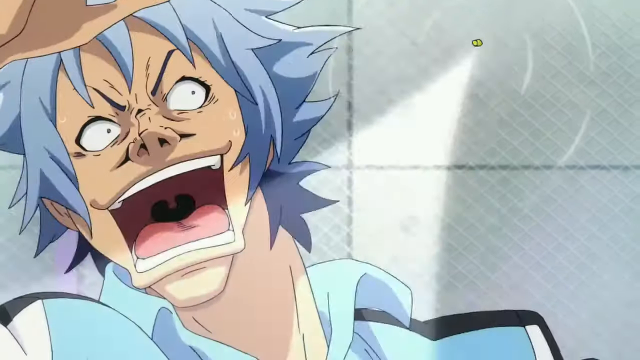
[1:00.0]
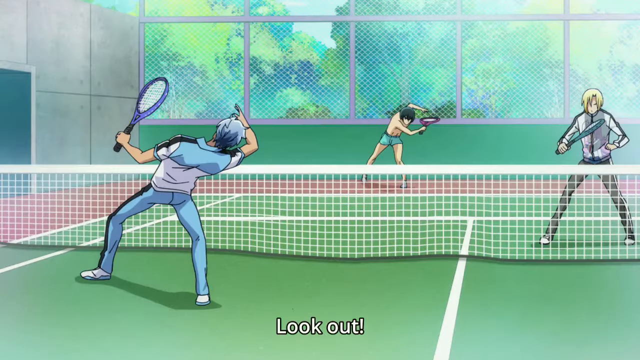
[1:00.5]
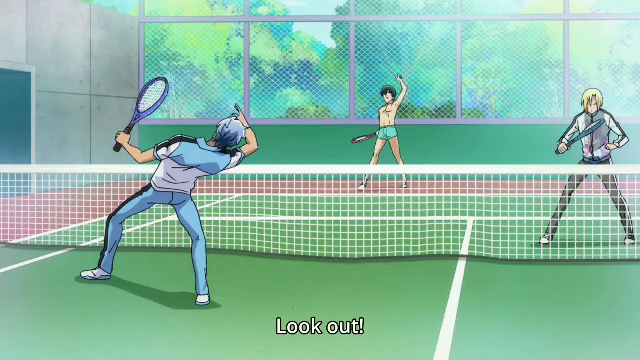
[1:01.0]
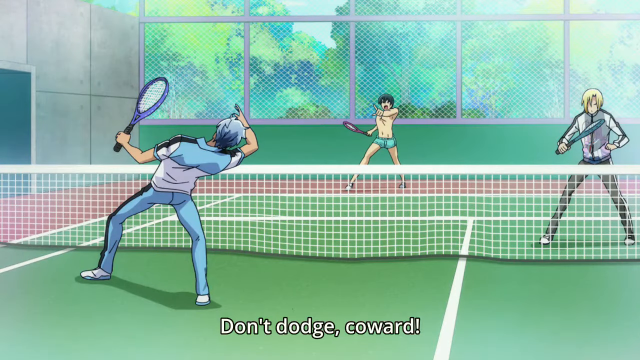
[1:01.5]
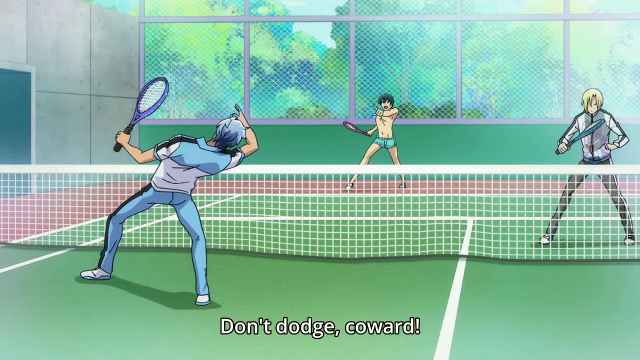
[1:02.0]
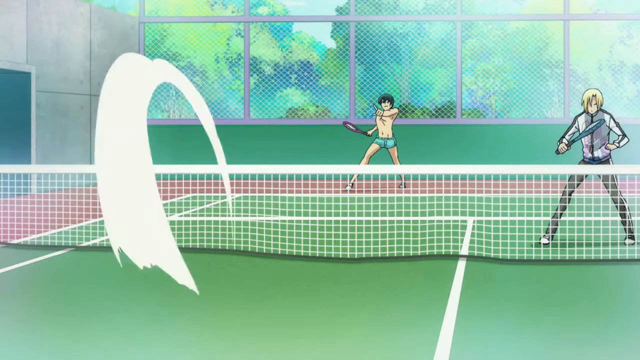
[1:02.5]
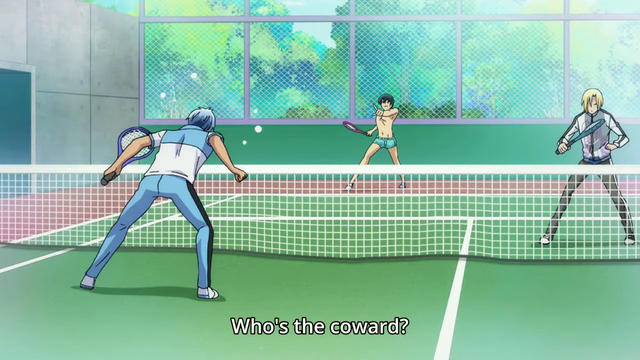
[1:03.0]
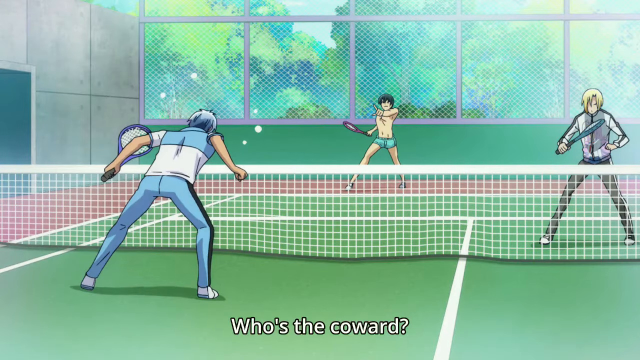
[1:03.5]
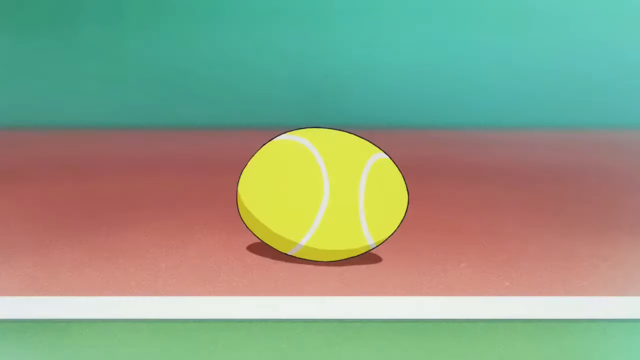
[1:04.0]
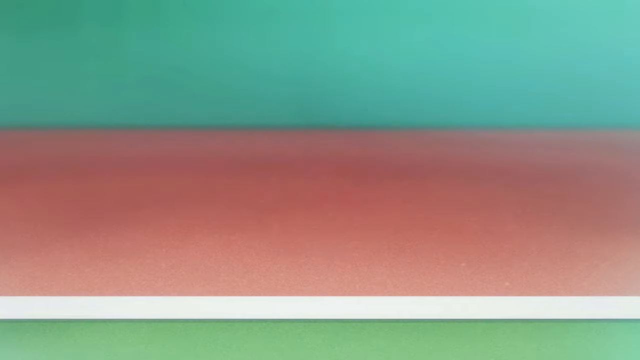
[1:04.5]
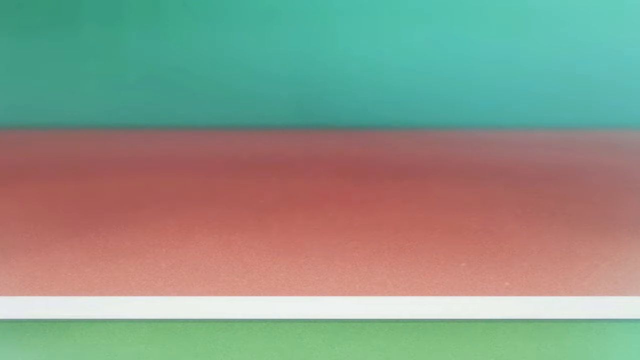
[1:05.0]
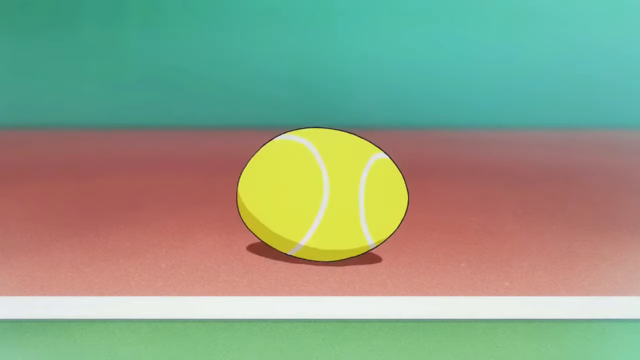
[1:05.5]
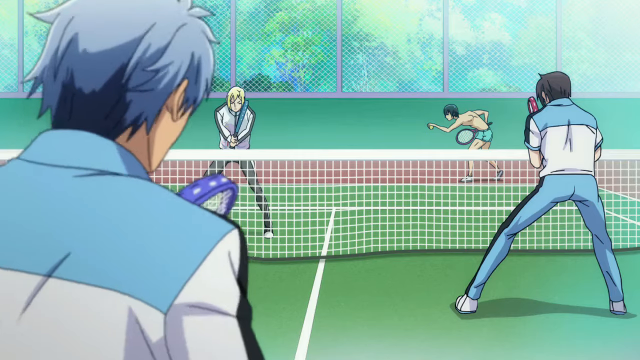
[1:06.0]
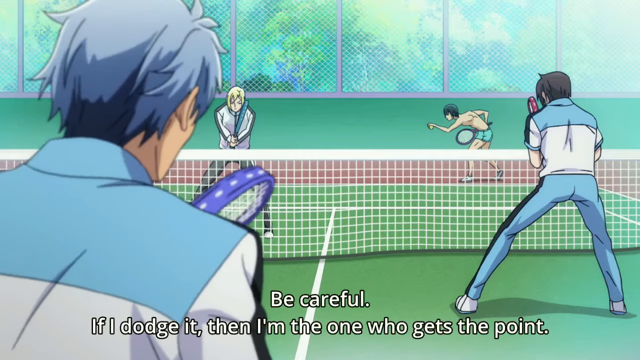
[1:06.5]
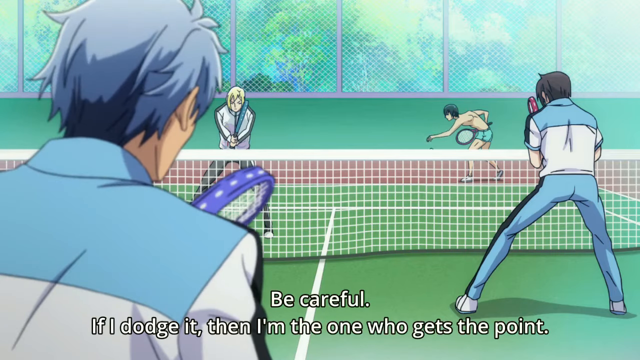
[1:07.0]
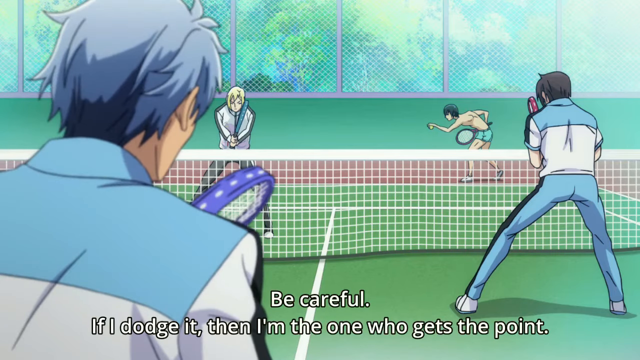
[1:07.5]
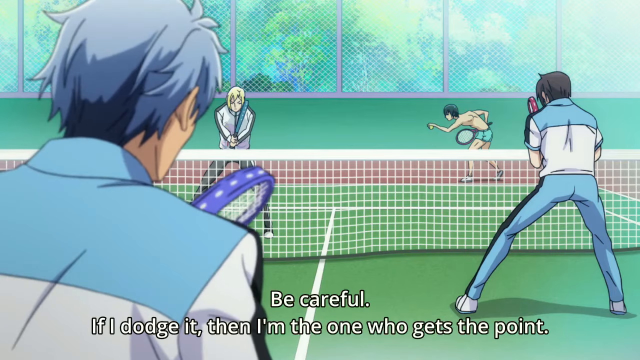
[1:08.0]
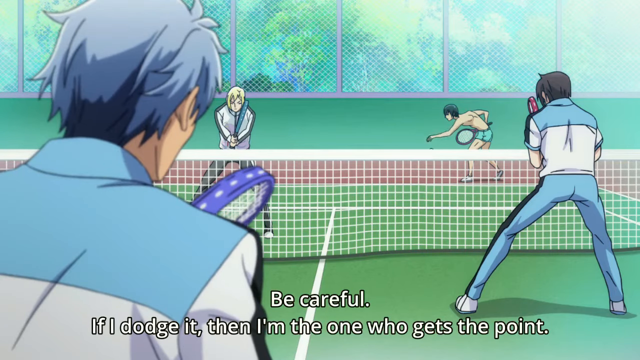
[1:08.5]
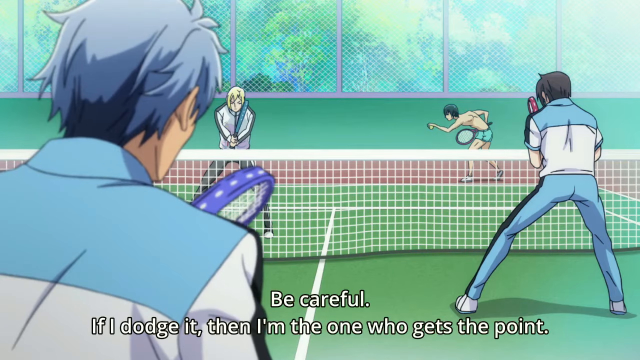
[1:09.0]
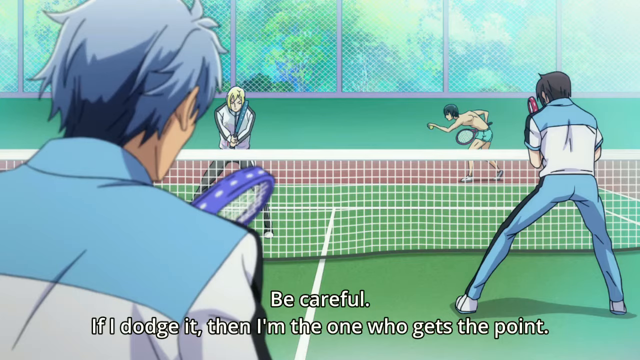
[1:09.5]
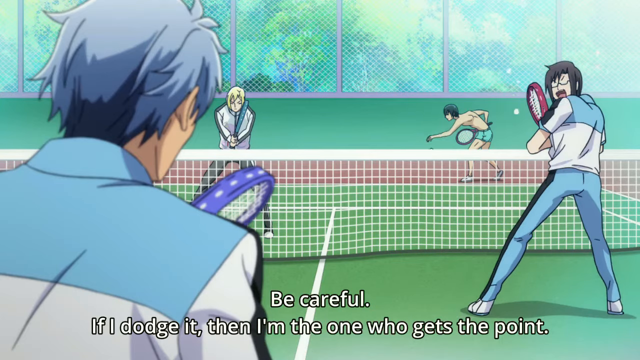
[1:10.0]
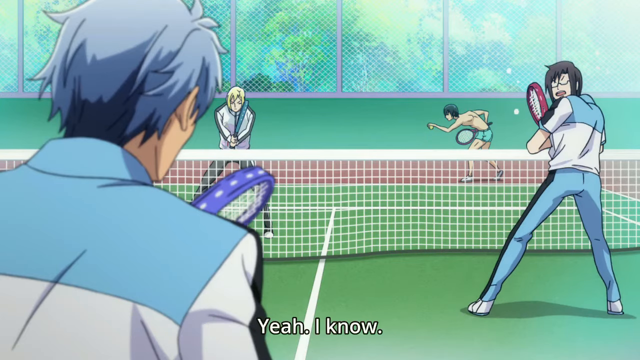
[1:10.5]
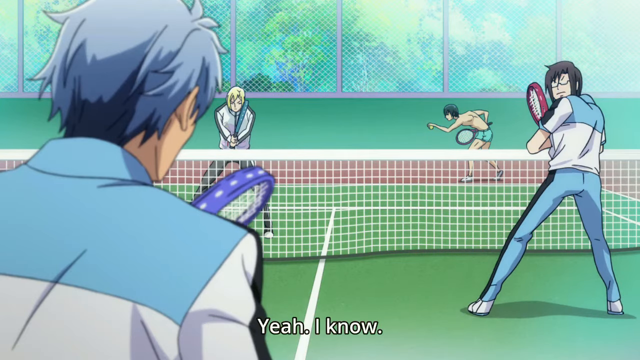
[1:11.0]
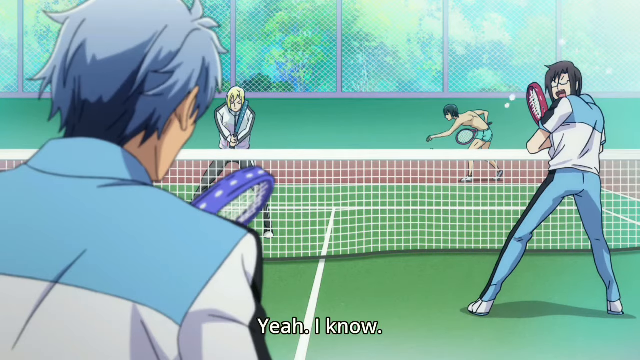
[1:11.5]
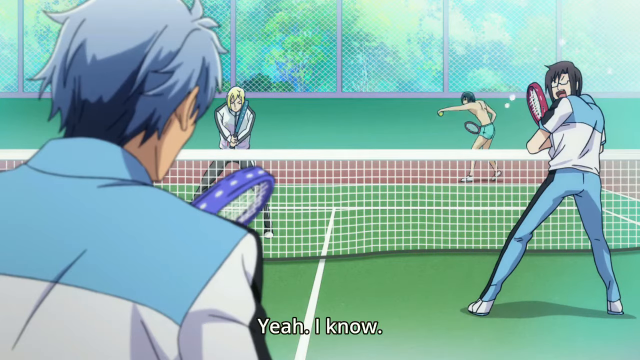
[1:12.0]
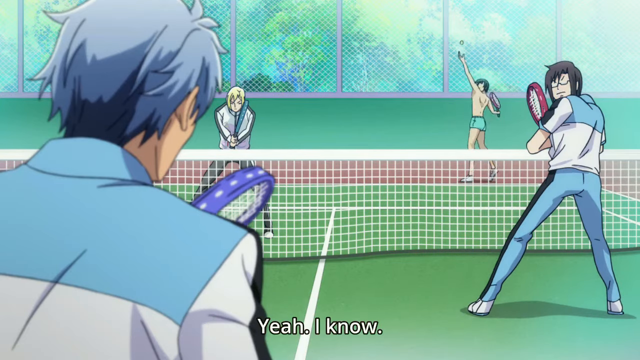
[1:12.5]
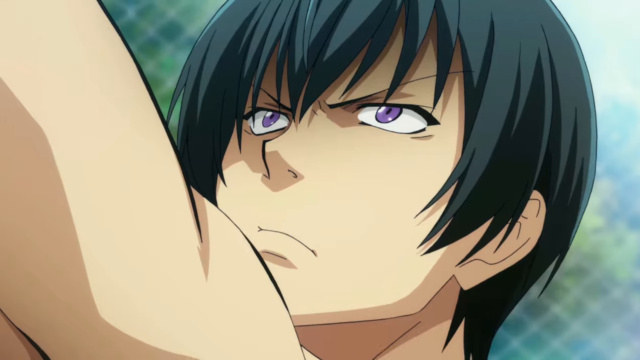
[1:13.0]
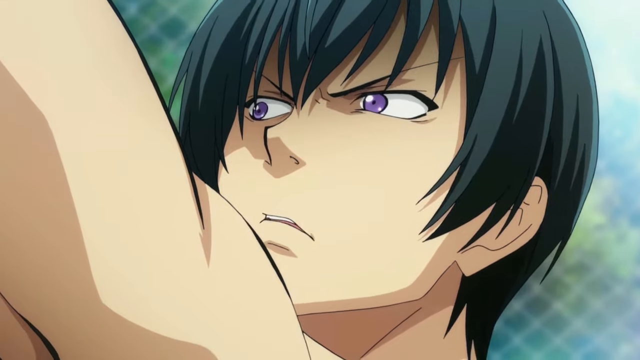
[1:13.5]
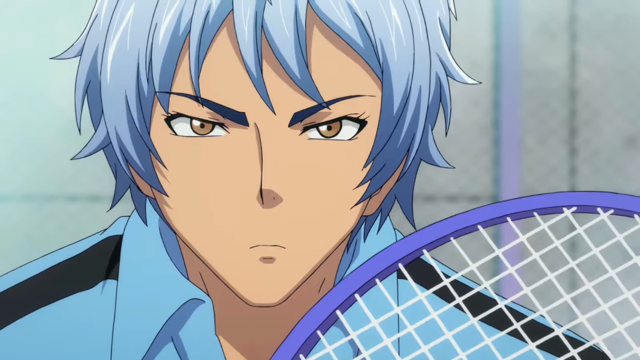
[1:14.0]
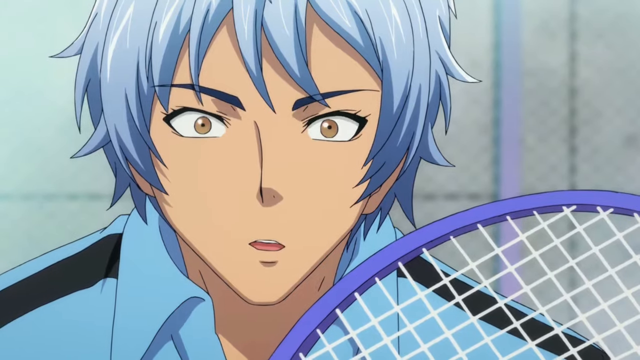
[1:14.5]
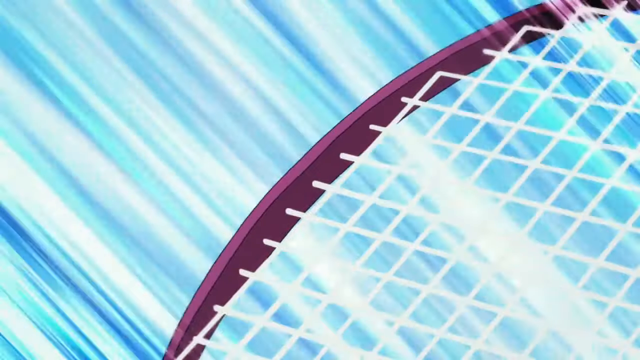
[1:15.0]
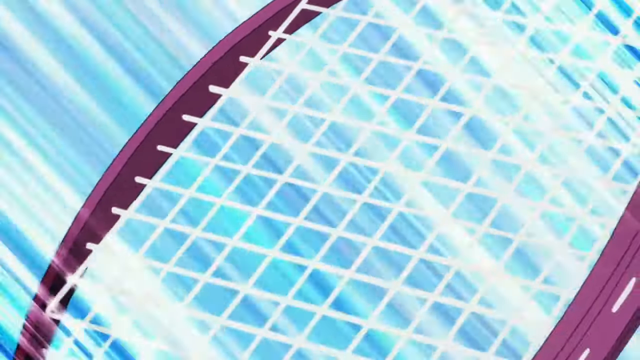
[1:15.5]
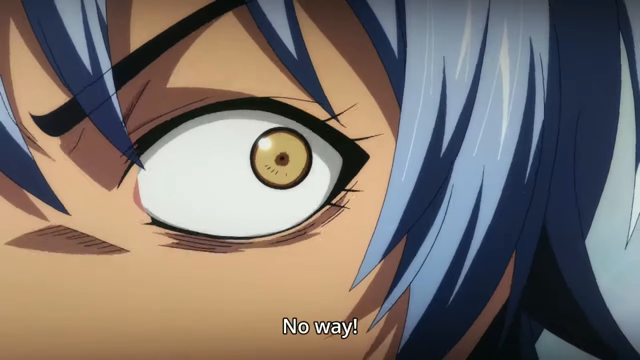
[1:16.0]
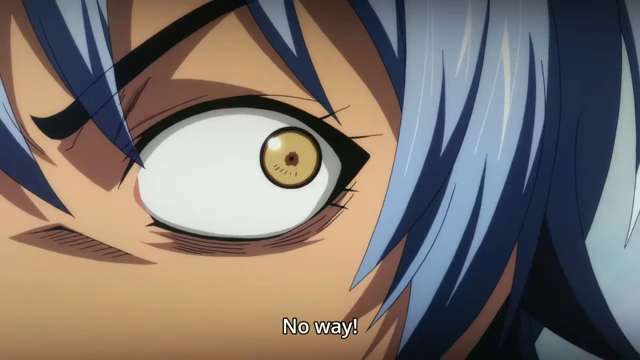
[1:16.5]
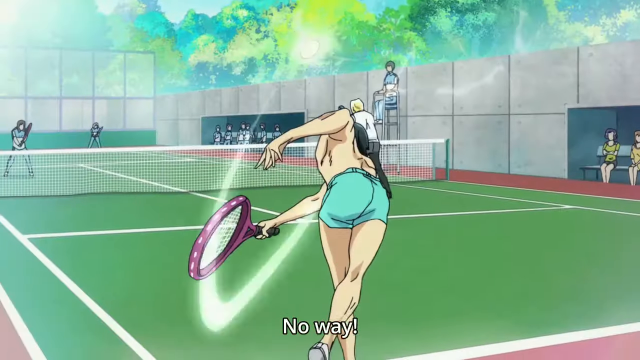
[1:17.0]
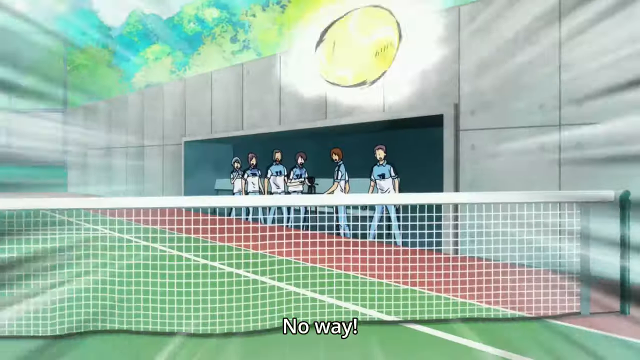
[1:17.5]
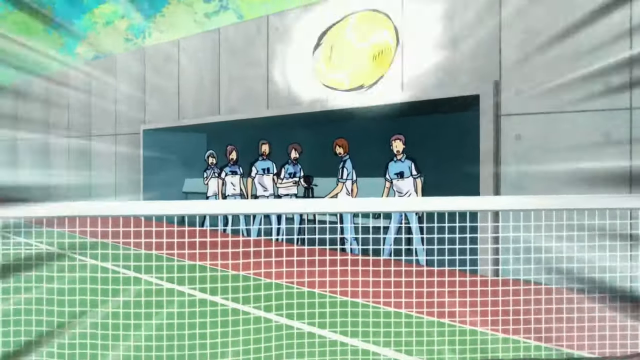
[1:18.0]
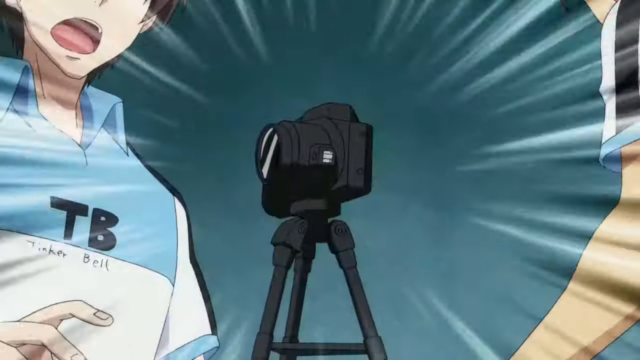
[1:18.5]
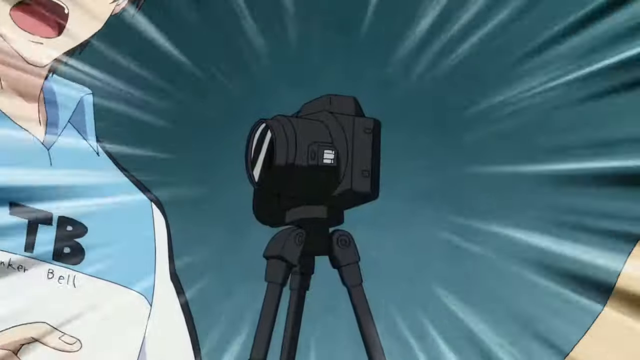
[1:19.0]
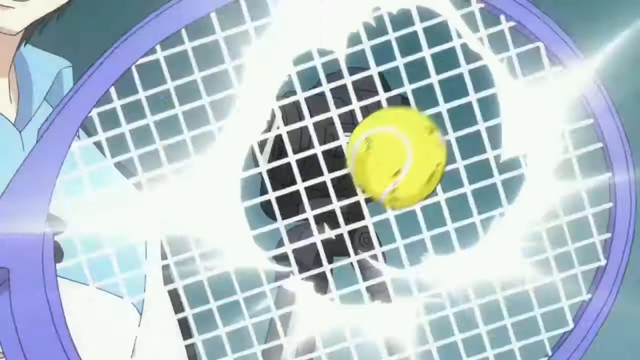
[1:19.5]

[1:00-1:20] The animation is in a sort of Japanese or manga style. A close-up shows a very angry person with short blue hair, eyebrows crossed angrily and mouth wide open in a rectangular shape, so the inside of the mouth and the tongue are visible. Two teams of two are playing tennis on a green court surrounded by a chain link fence, with the long tennis net between them. They are arguing, and one of them shouts "who's the coward" as the words come up on the bottom of the screen. The yellow tennis ball hits the floor just outside the white line. One of the players starts to serve, and the words say "be careful if I dodge it then I'm the one who gets the point." The guy bounces the ball, throws it higher up into the air and hits it really hard with his racket. It goes straight towards a black camera sitting on a tripod at the side of the court, where four other people are standing, all wearing blue tops with the letters "TB" on them. As the ball goes towards them, the other player leaps across.